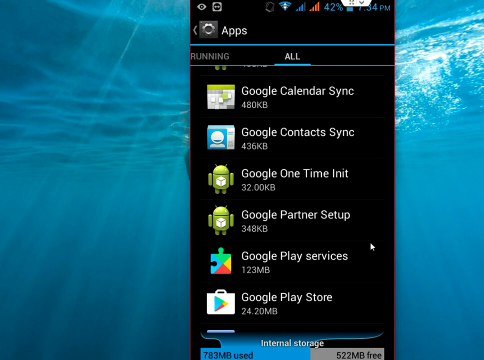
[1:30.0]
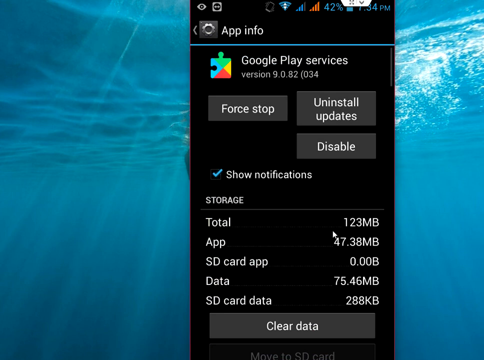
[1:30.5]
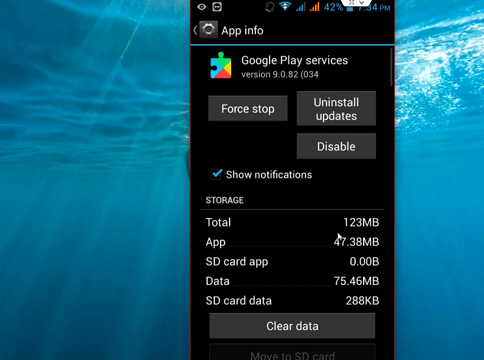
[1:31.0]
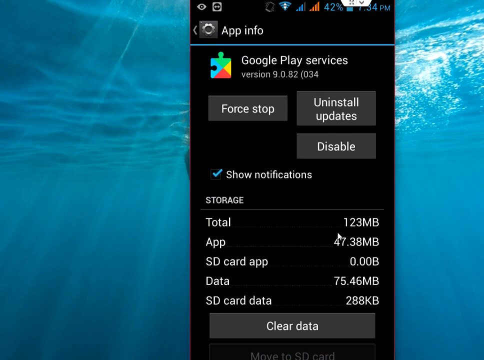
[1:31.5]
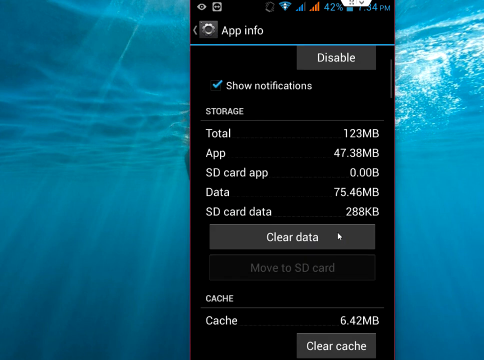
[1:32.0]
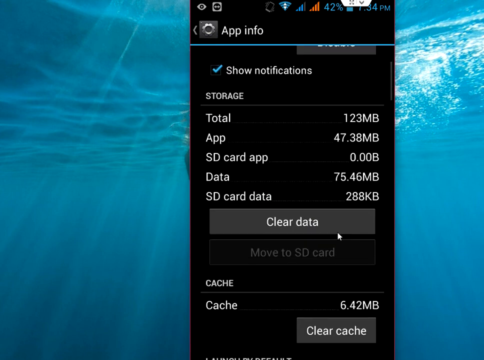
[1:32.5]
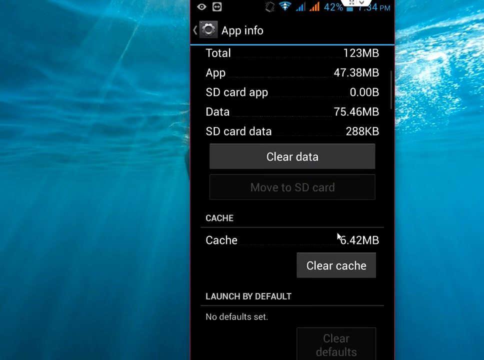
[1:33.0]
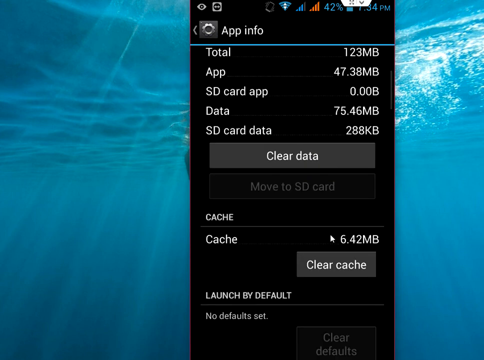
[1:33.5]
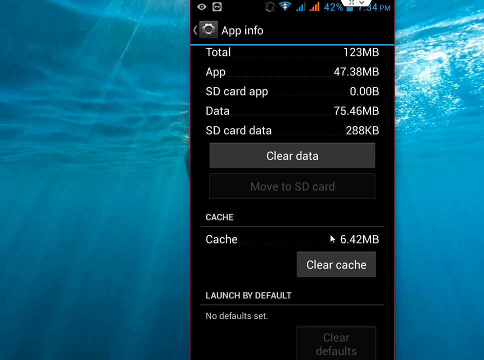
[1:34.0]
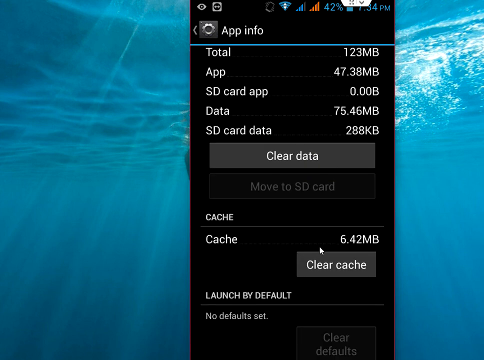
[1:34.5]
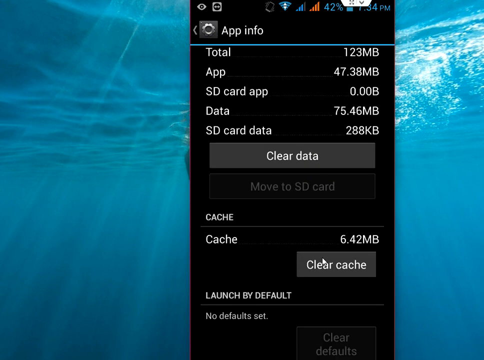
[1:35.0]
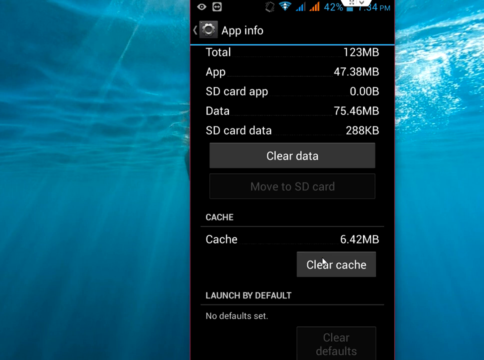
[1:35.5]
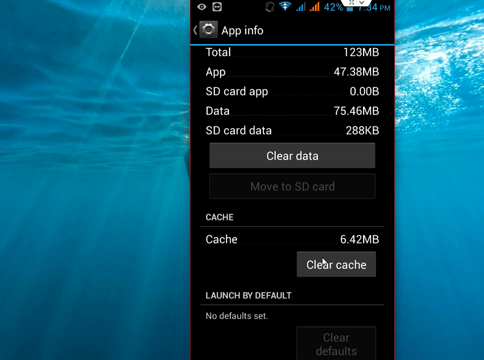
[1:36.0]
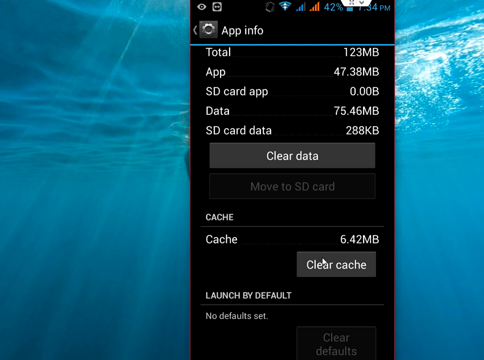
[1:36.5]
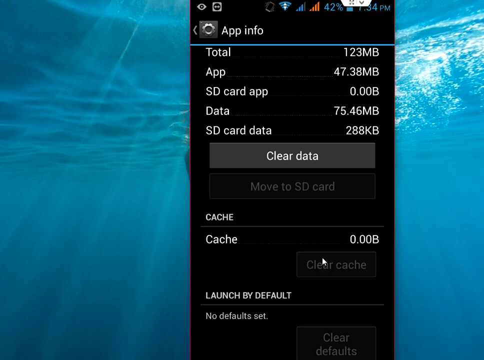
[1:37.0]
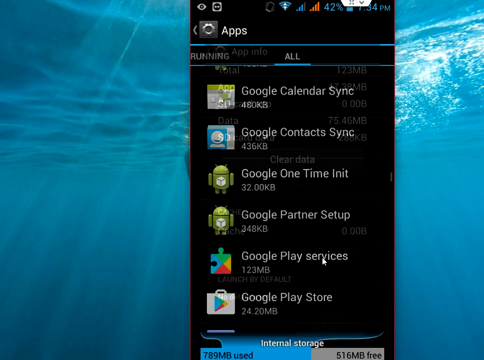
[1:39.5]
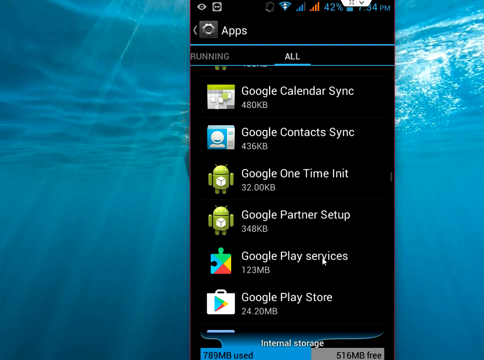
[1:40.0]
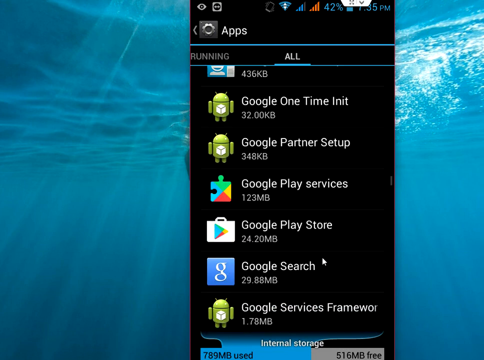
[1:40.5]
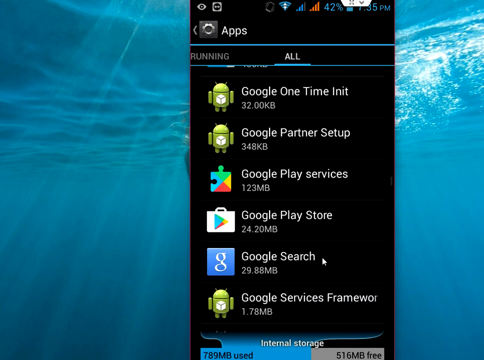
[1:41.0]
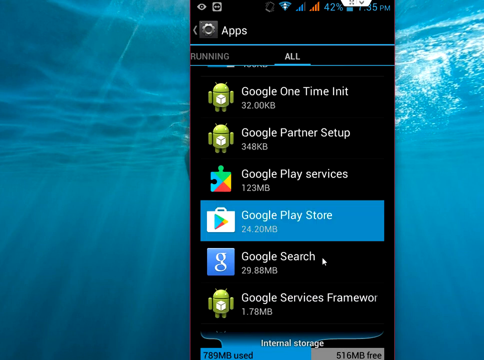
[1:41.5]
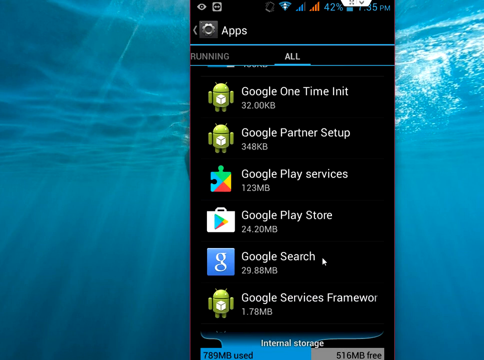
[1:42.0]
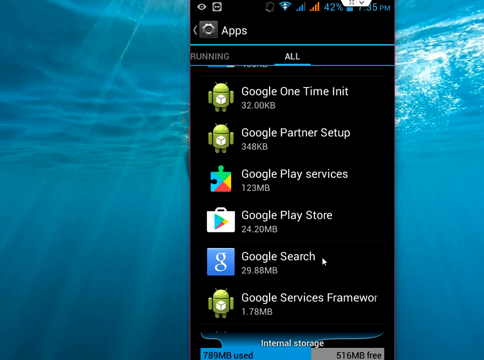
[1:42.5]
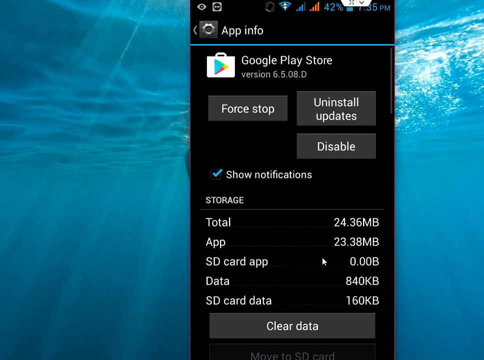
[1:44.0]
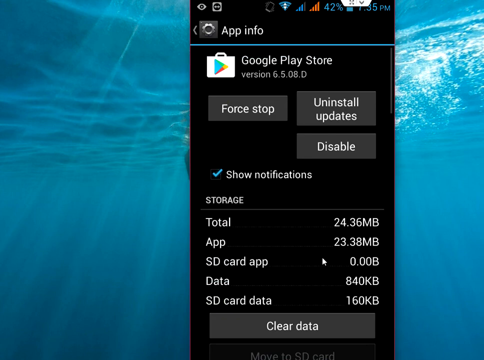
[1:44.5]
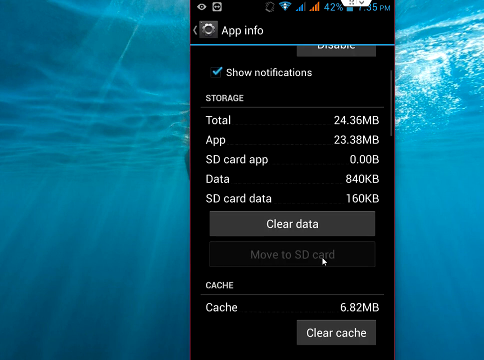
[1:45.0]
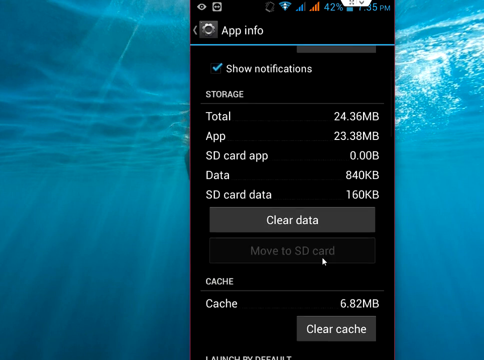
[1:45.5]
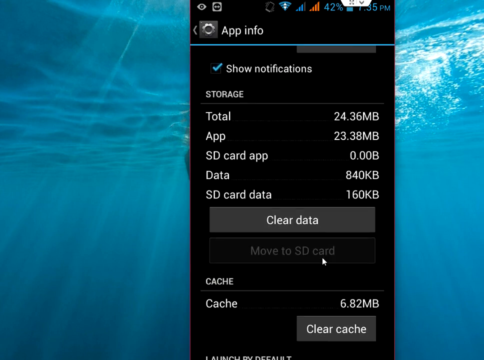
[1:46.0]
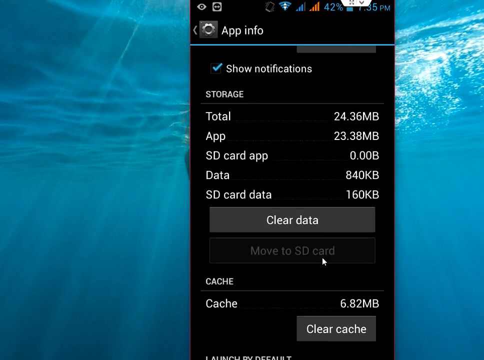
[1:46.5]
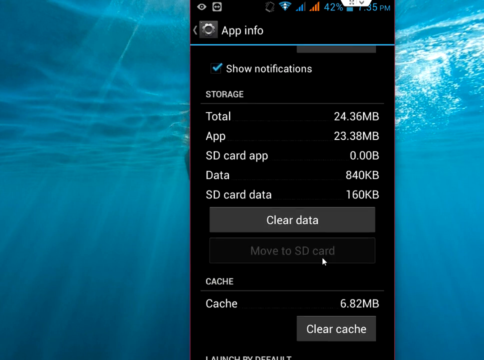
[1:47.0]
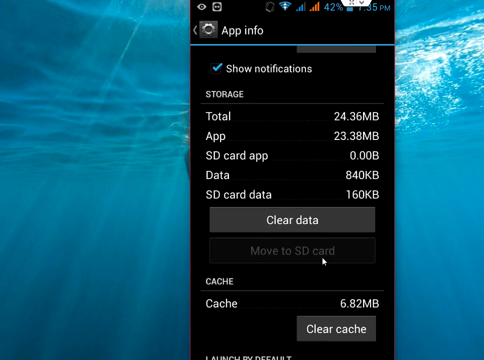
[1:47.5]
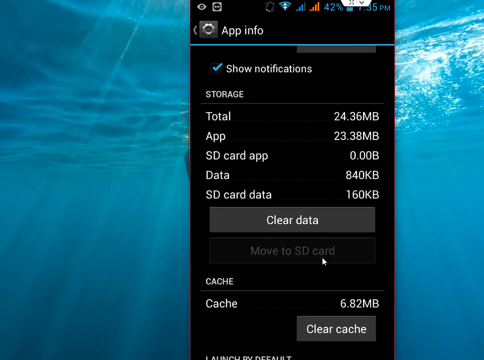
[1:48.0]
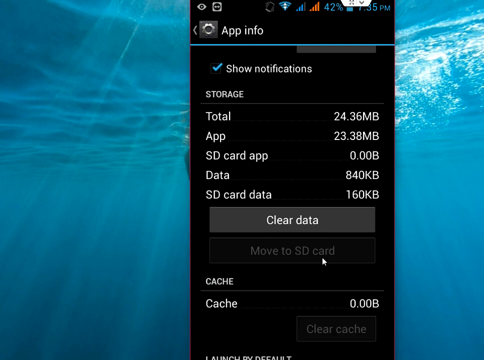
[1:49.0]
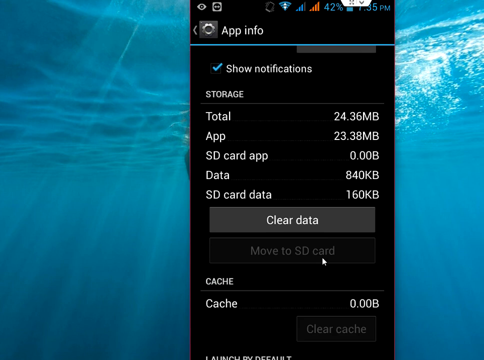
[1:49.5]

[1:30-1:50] In Google Play services, the user clicks the Clear Cache button. The user then scrolls to the Google Play Store, keeping the cursor static while scrolling; when the scroll reaches the bottom, the cursor lands right on the Clear Cache button, and the user presses it. The cache goes to zero.